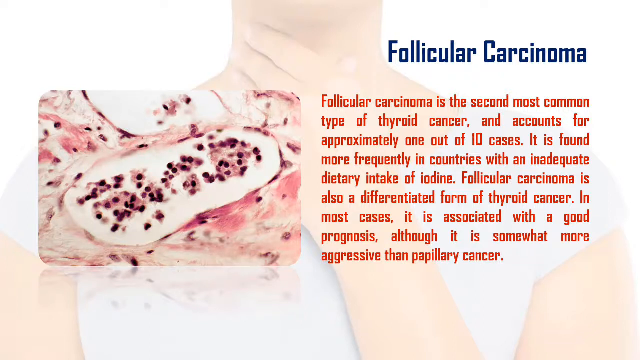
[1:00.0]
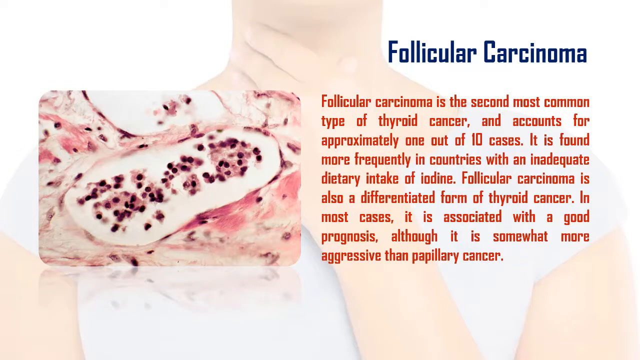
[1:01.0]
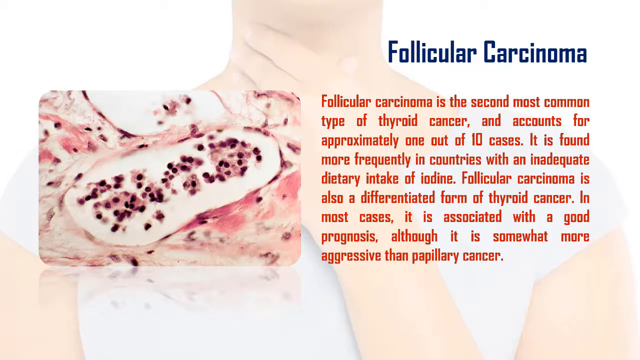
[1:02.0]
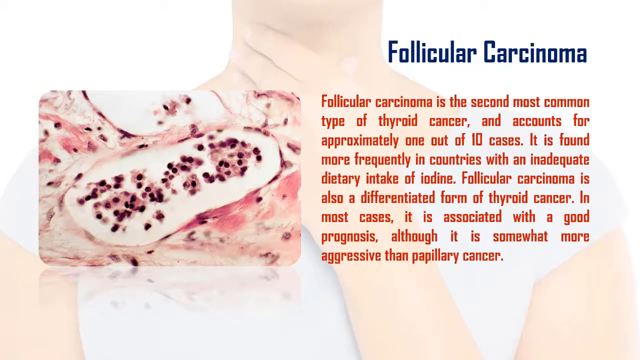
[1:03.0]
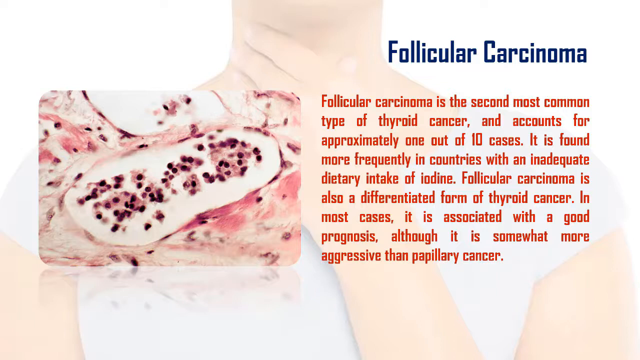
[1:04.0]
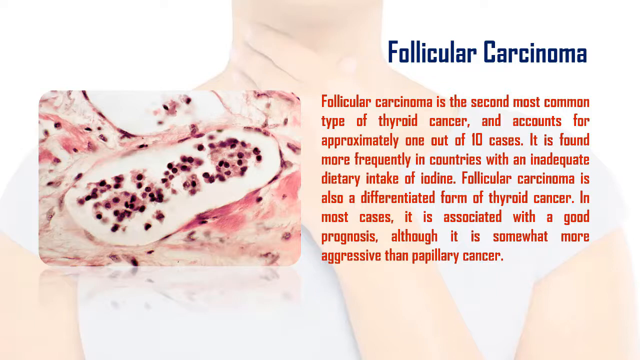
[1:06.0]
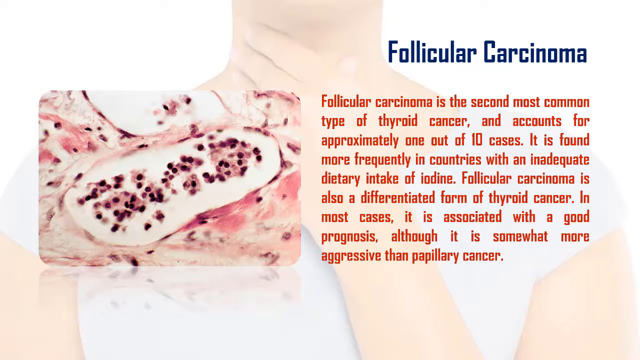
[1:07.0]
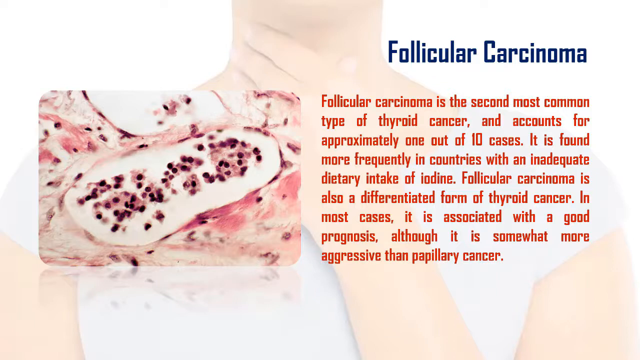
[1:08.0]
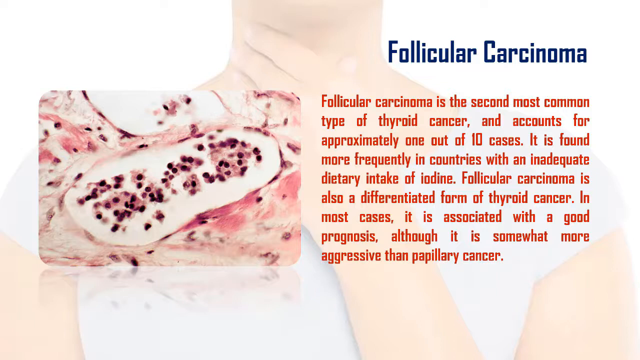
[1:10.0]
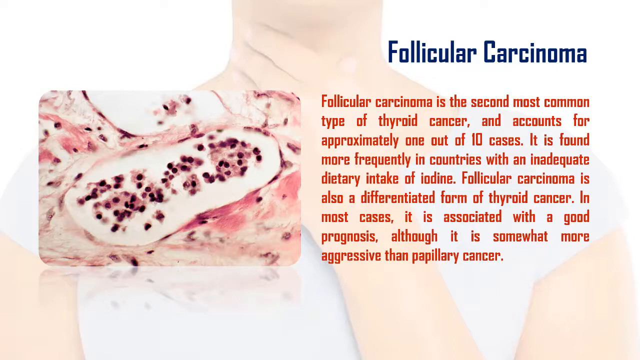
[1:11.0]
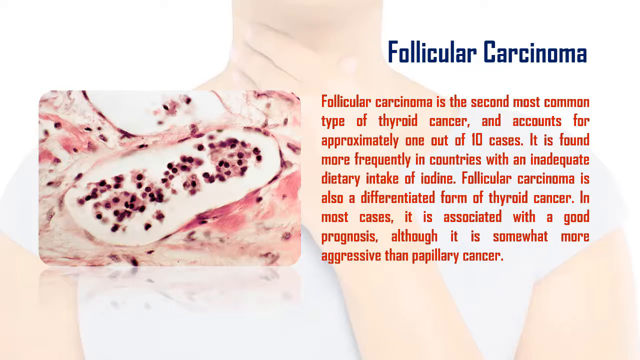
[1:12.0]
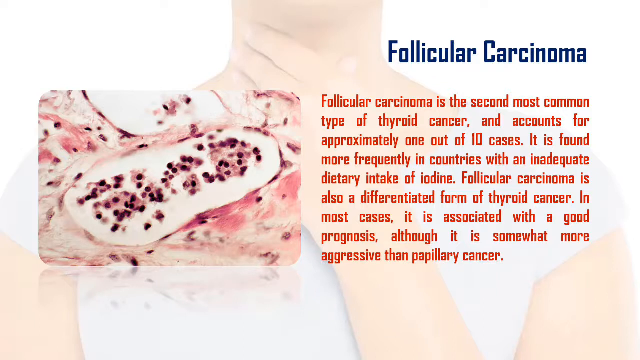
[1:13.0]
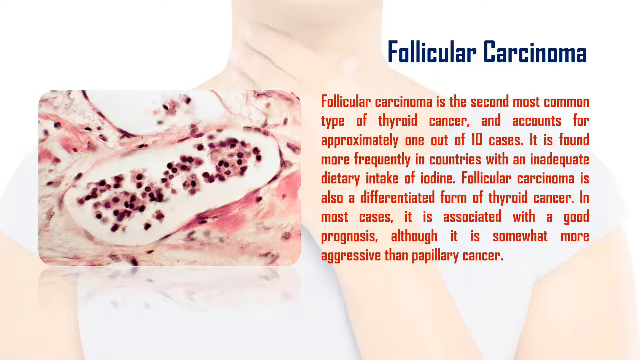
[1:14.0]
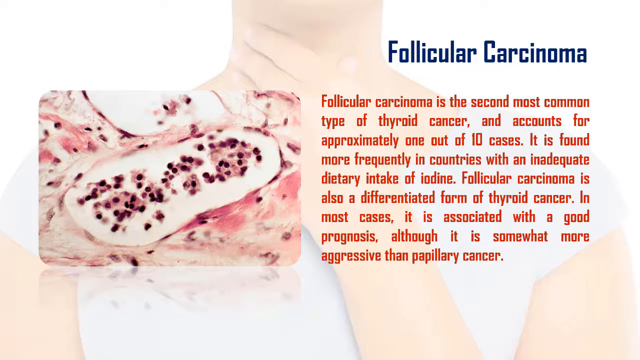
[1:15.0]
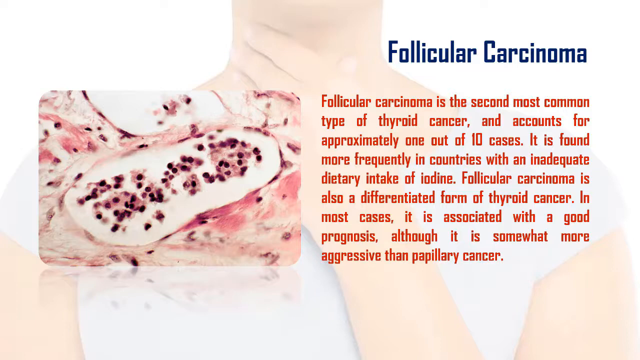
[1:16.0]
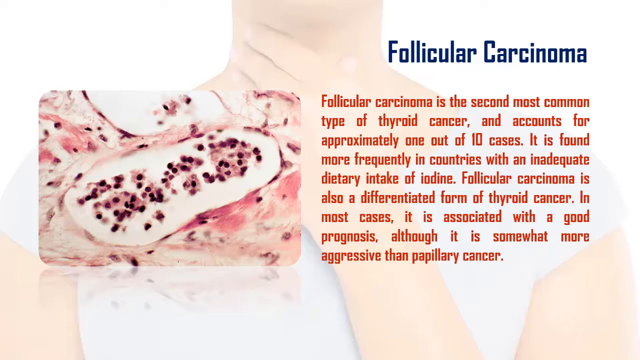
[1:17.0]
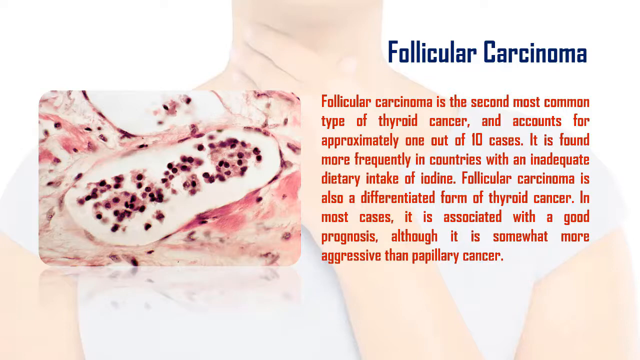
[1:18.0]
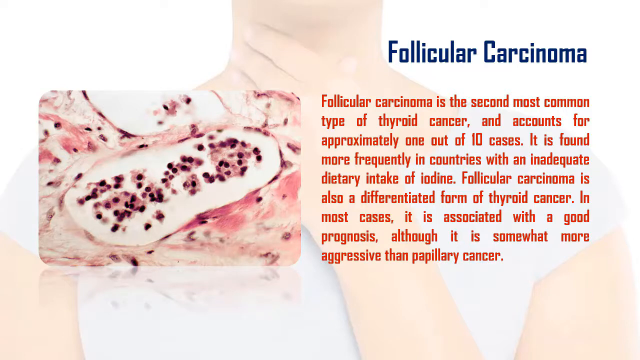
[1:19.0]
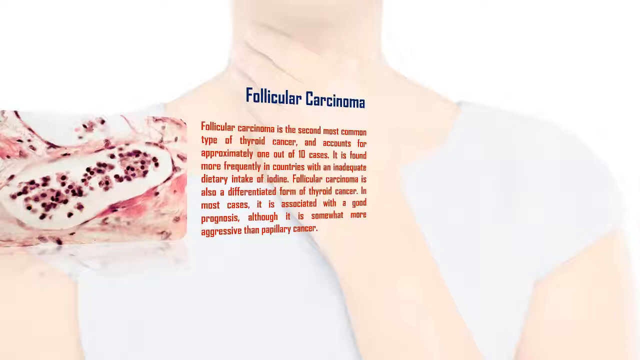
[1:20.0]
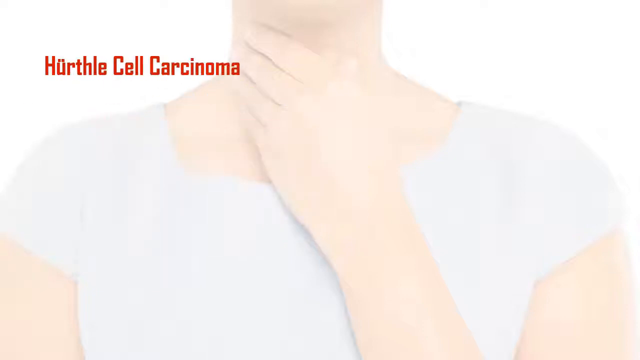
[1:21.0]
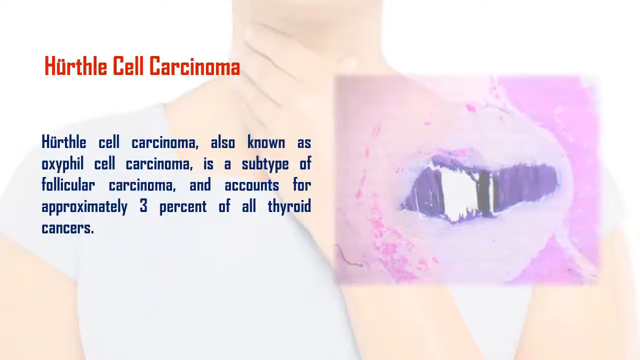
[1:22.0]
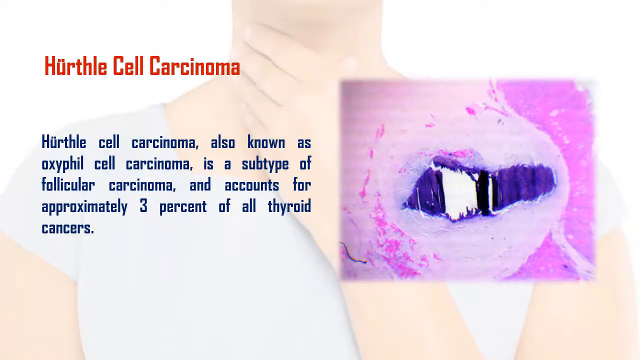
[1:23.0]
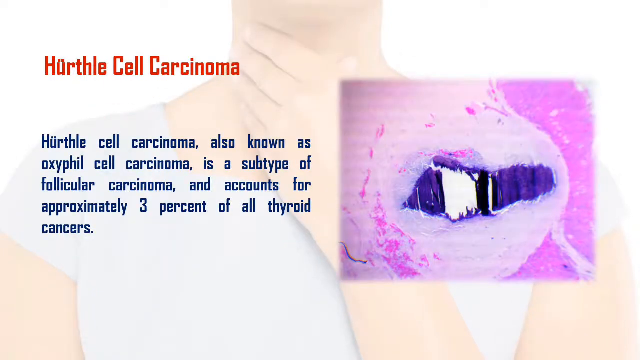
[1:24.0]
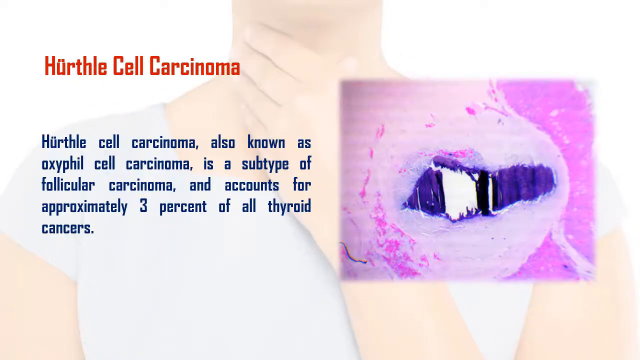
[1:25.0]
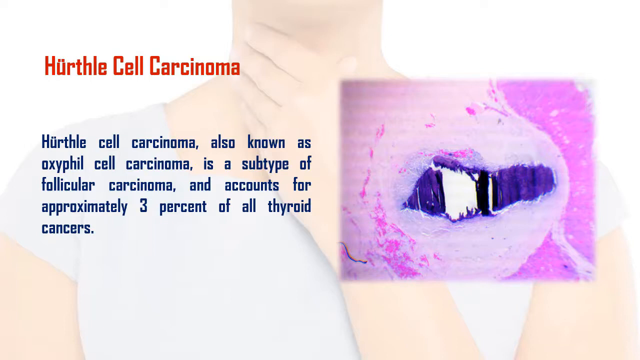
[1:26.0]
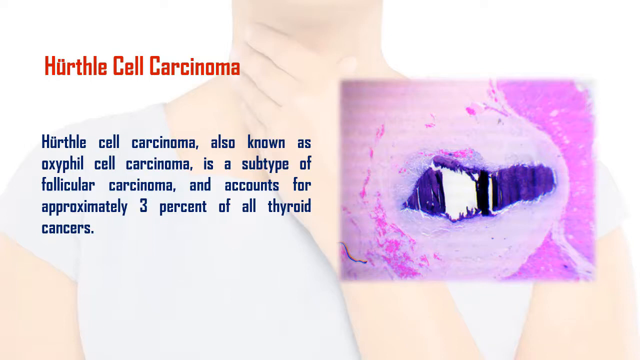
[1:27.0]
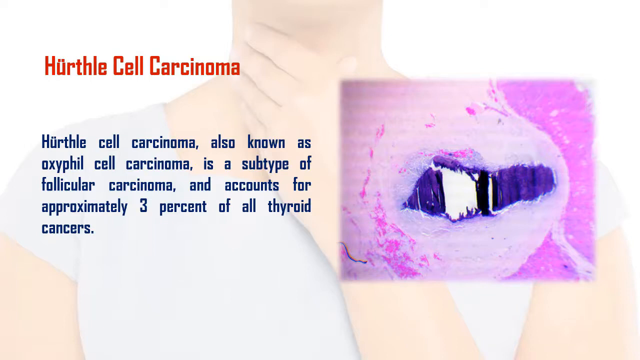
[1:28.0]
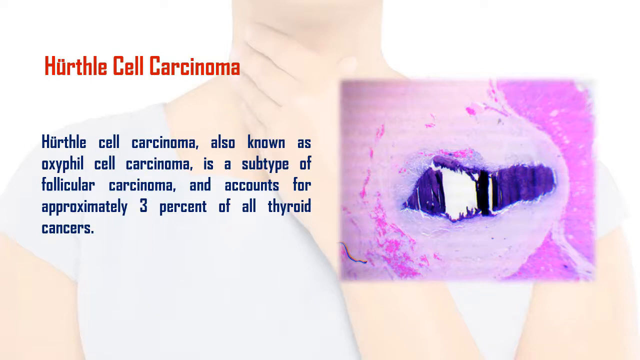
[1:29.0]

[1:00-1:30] An illustration shows a Caucasian woman's body from below her chest up to her chin, with her left hand held across her throat. Text and illustrations appear in front of this image. On the left side is an illustration of this cancer as if looking under her skin, with small dots in areas of flesh and muscle. To the right, from top to bottom, blue text reads "follicular carcinoma," and below it red text reads "follicular carcinoma is the second most common type of thyroid cancer and accounts for approximately one out of 10 cases. It is found more frequently in countries with an inadequate dietary intake of iodine." The video then moves to the next slide, with a diagram of the cancer on the right and a description in blue text on the left about "Hurthle cell carcinoma."